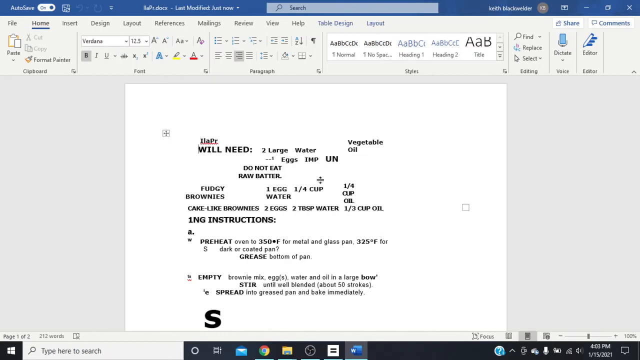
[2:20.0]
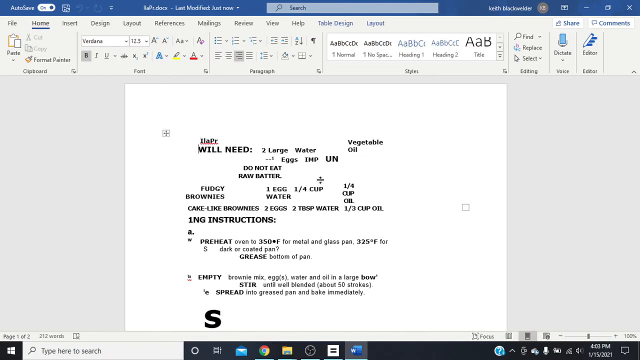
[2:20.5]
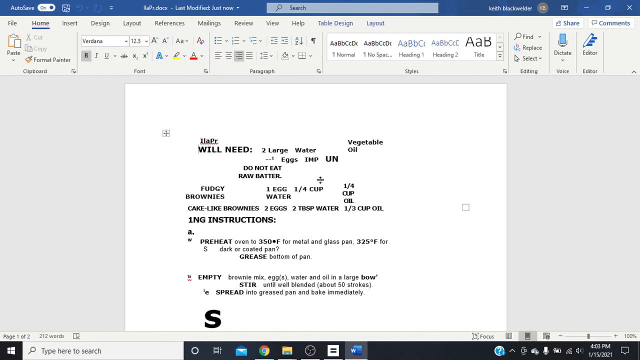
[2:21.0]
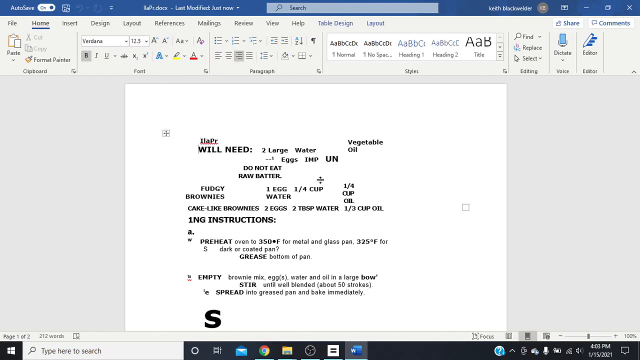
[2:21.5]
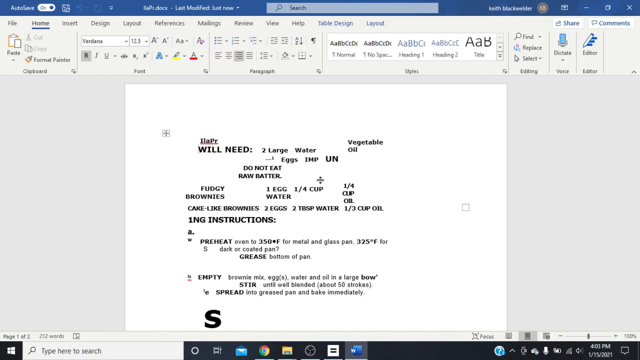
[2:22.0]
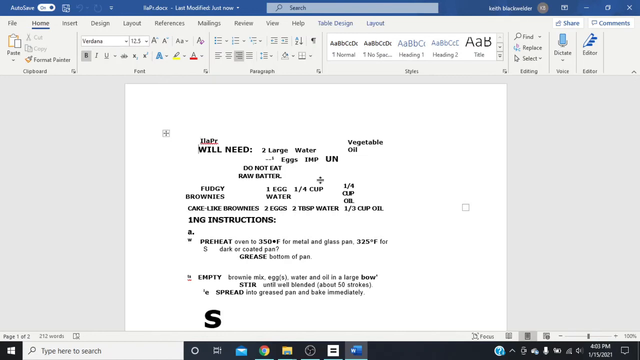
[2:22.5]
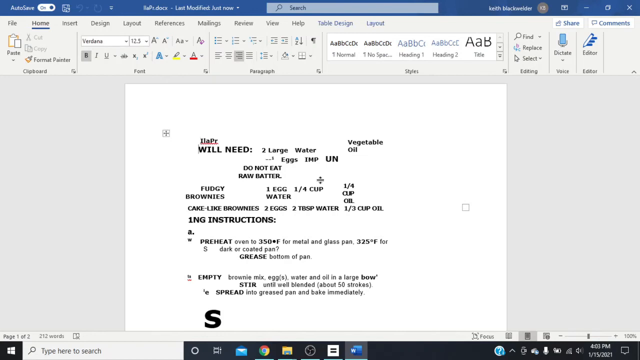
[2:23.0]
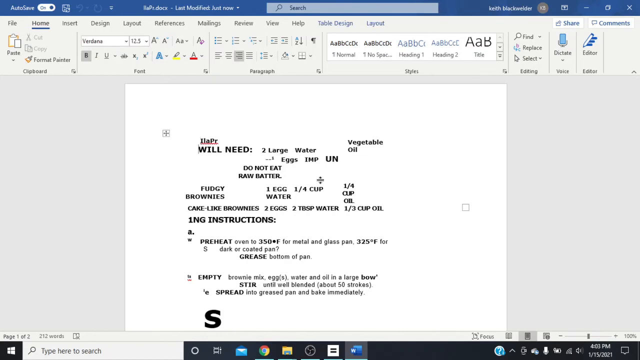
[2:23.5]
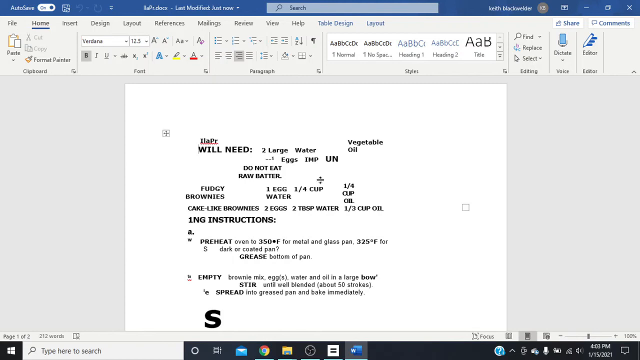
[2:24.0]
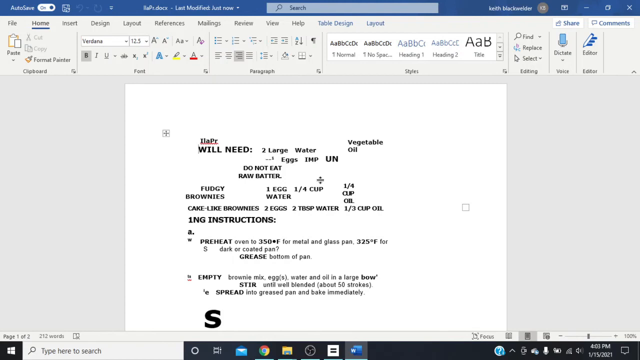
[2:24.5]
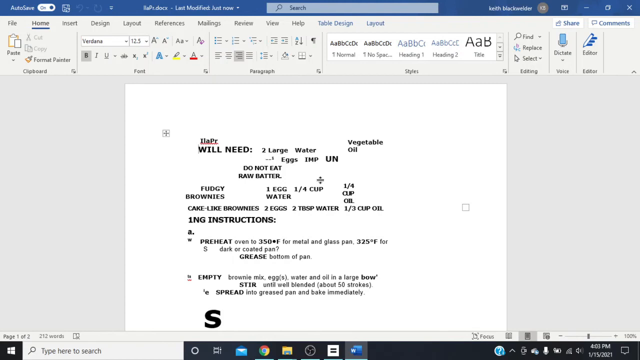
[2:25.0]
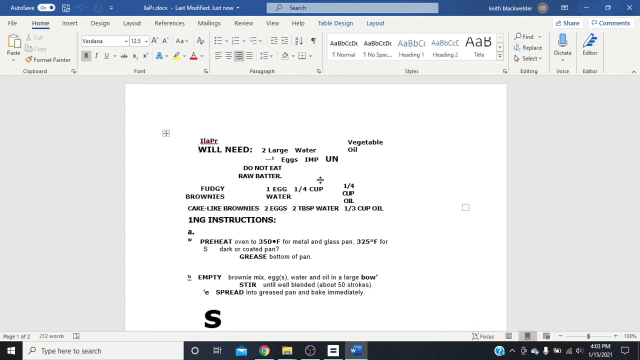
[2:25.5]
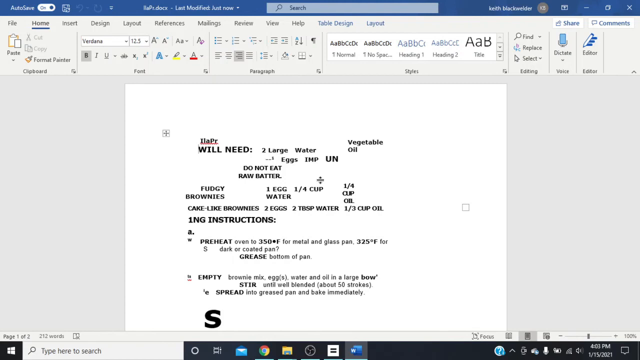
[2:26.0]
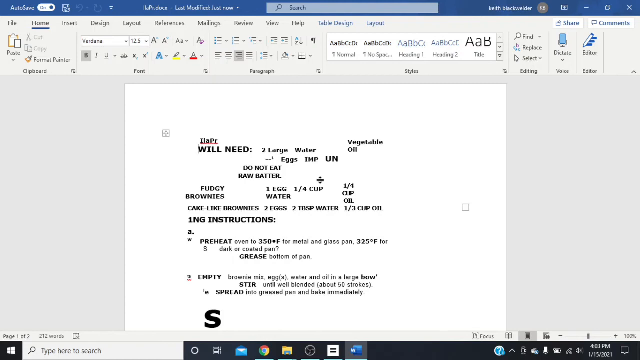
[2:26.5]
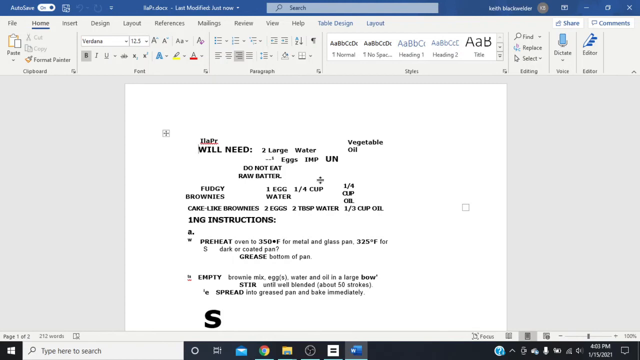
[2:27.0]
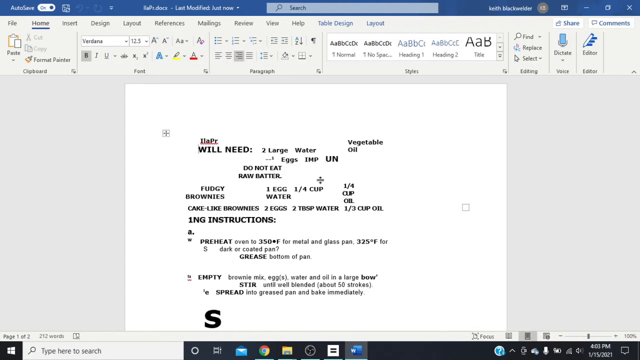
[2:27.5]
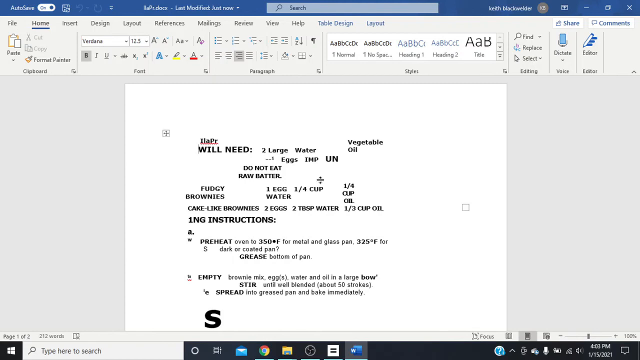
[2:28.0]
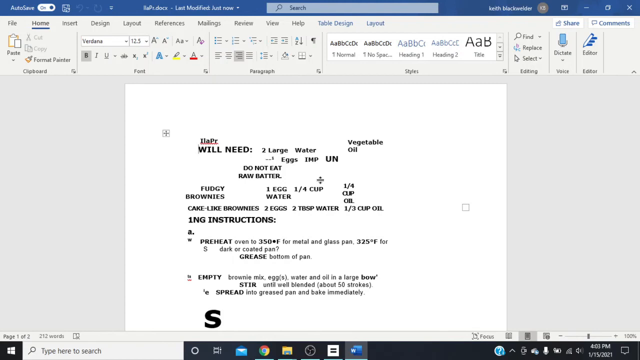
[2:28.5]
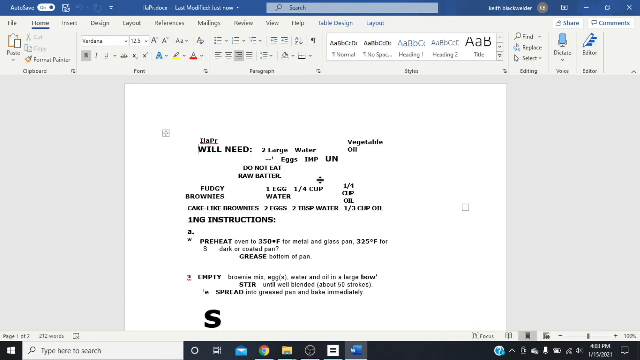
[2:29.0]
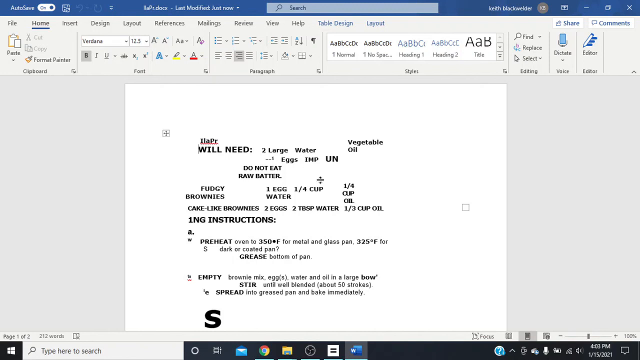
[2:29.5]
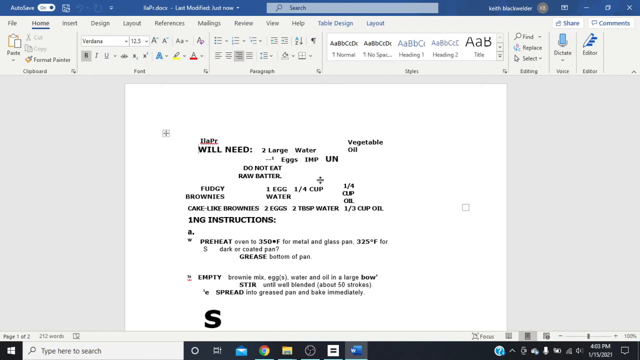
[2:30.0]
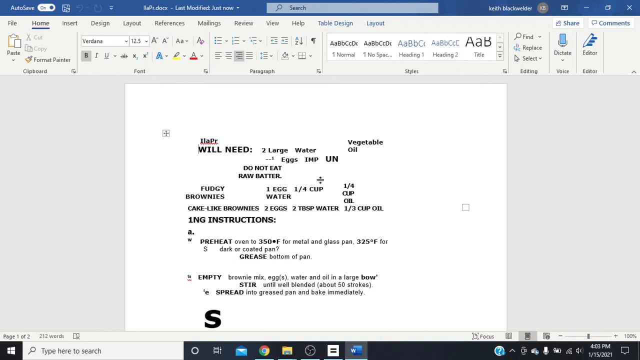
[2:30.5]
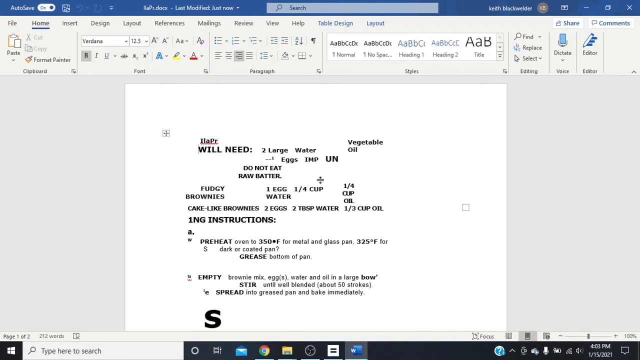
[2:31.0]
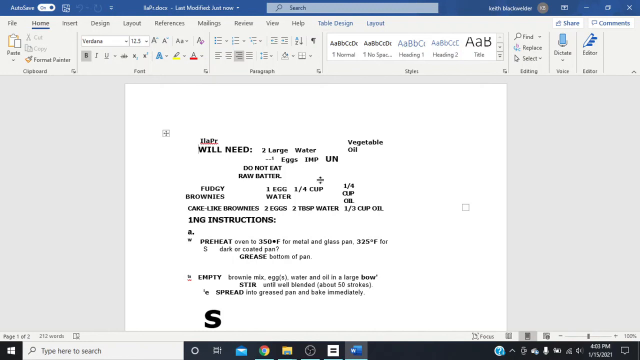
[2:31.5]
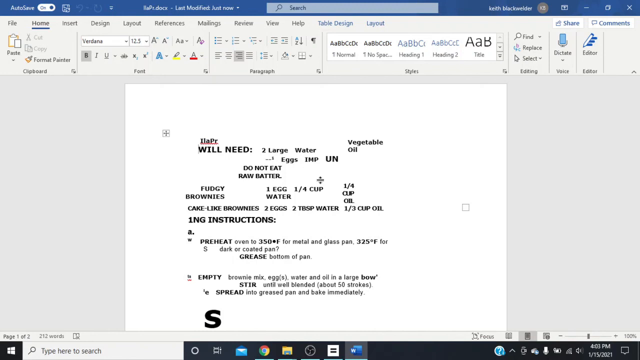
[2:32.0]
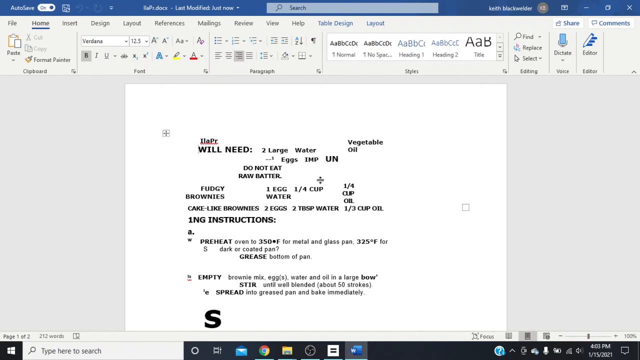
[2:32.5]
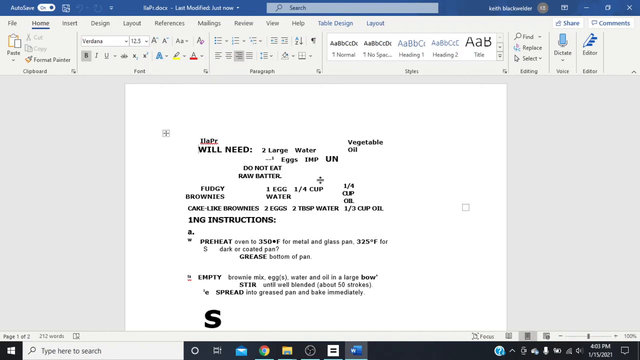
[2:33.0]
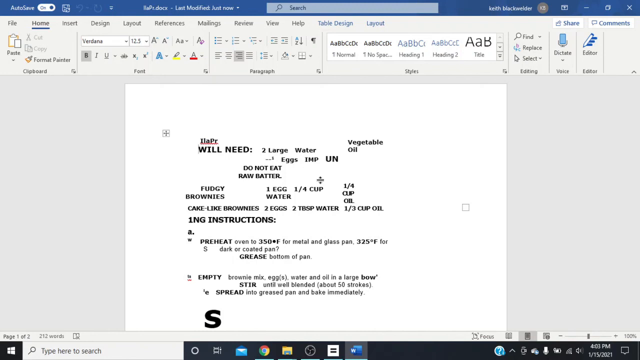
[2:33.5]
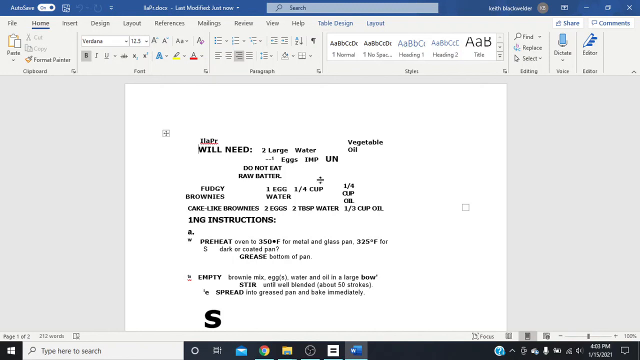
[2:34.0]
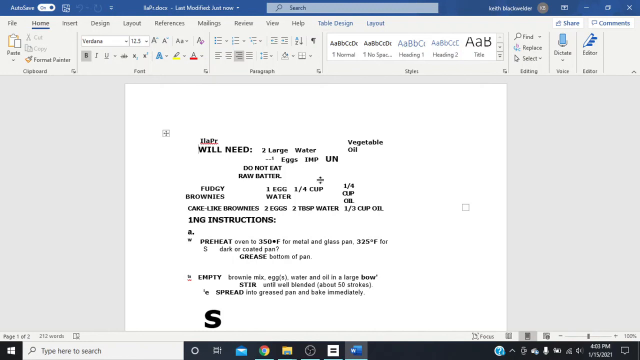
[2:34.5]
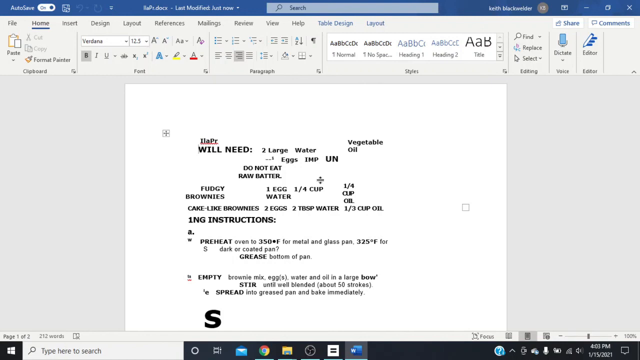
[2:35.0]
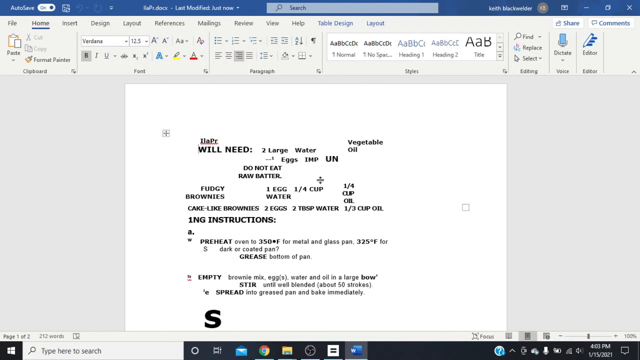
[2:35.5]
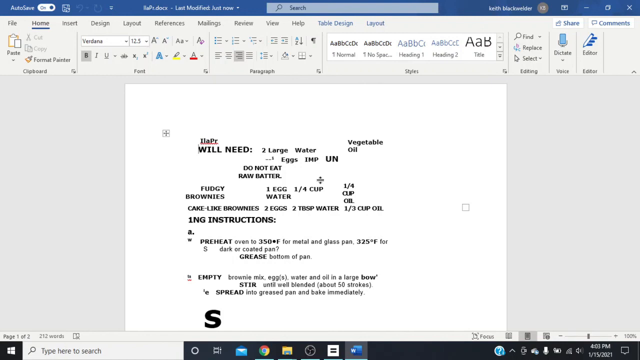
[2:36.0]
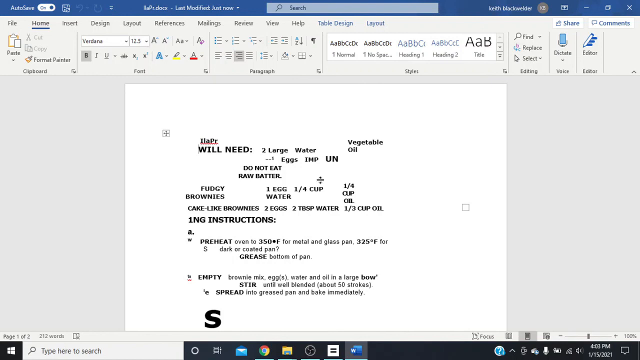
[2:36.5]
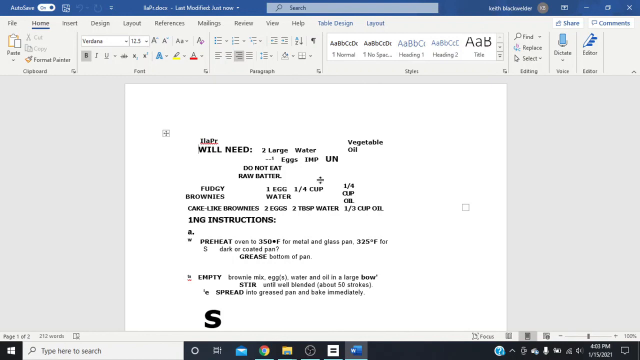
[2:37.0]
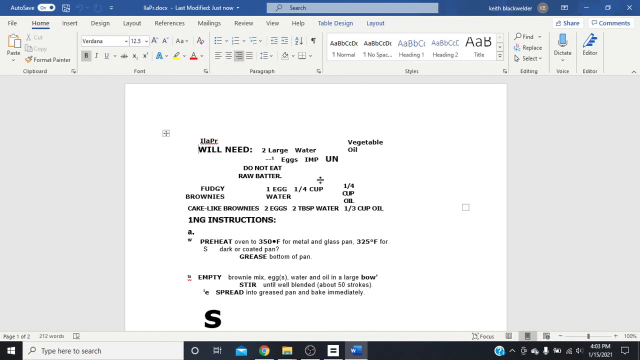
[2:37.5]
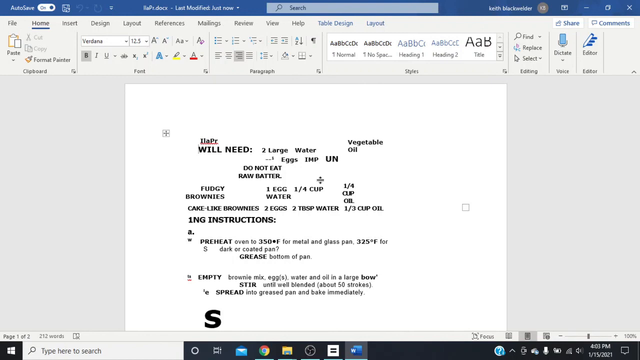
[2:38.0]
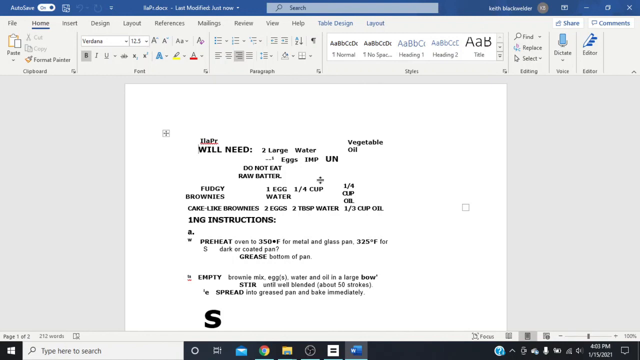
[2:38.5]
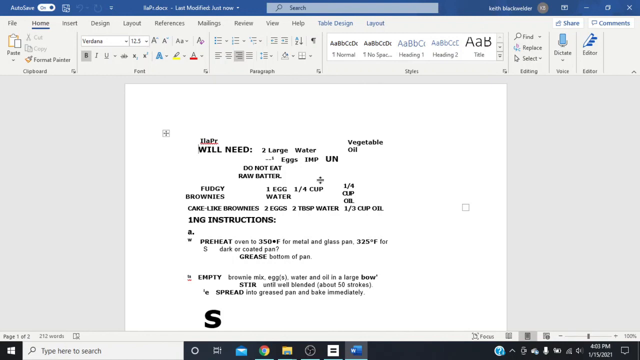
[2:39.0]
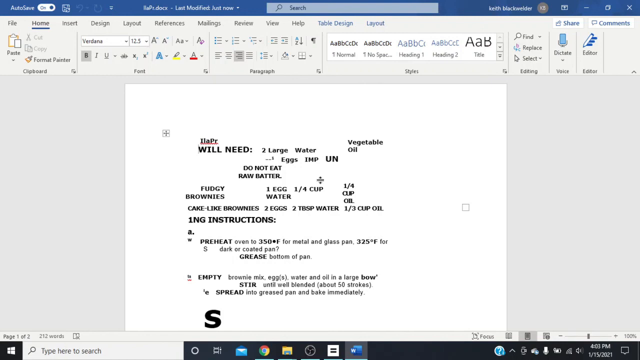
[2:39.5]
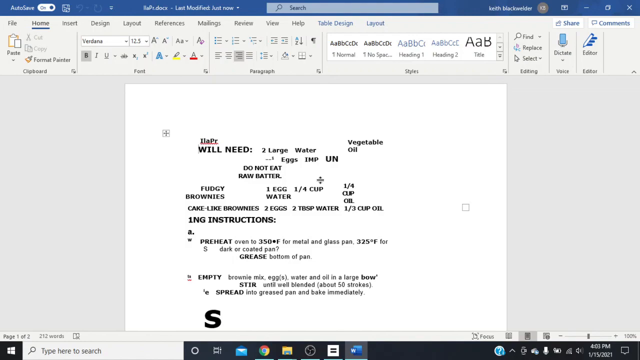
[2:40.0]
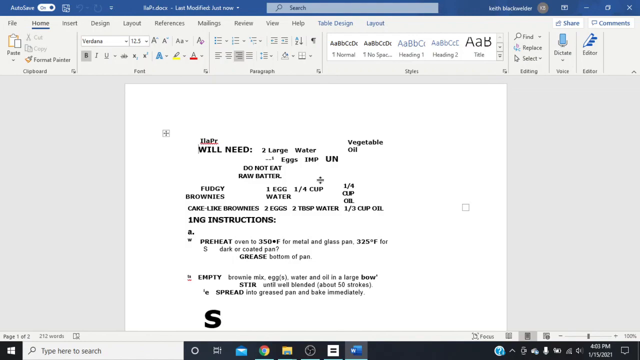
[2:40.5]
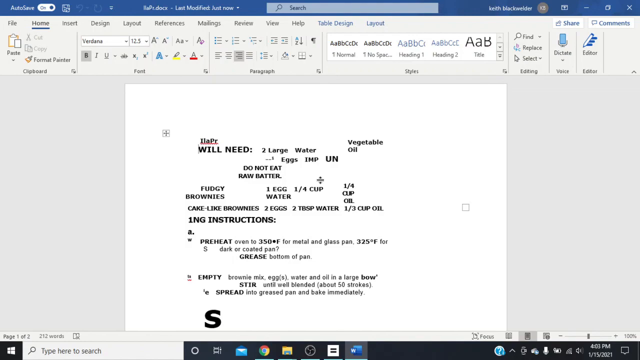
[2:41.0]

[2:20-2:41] A plus sign has been inserted at the top of the document. Some of the listed ingredients are two large eggs, water and vegetable oil, and there is a statement not to eat the raw batter. The Word interface has a banner at the top for changing settings and text sizes in the document. The document's name is shown at the top along with a note that it was modified just now, and the person's name and initials are also listed at the top. The selected font and size is Verdana 12.5. The document also says what to add for fudgier brownies than normal. Options at the top of the Word document include sharing it and inserting a comment within the text. At the top left of the screen, an auto-save toggle button is turned on.